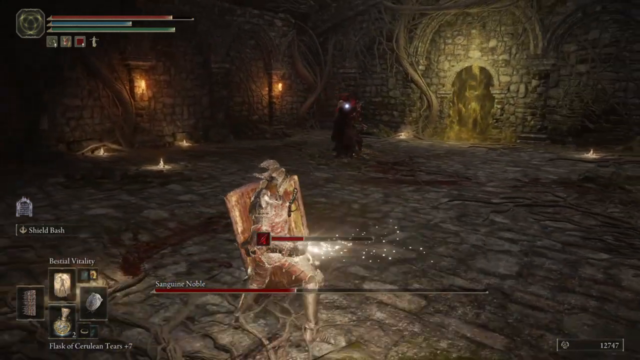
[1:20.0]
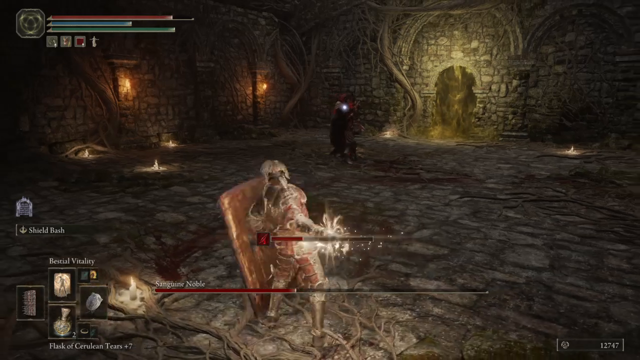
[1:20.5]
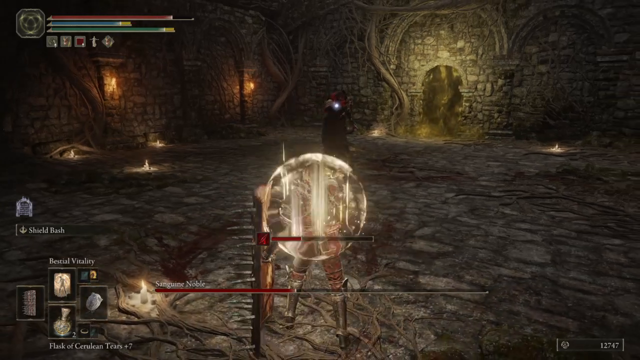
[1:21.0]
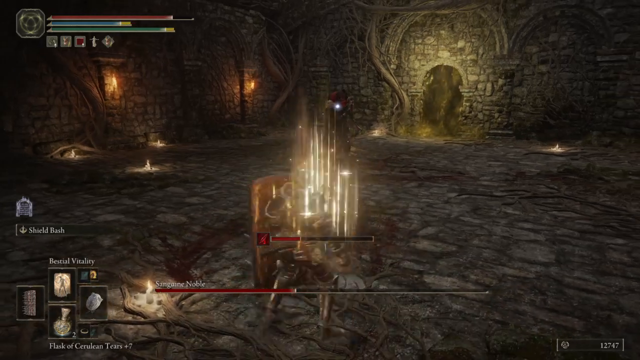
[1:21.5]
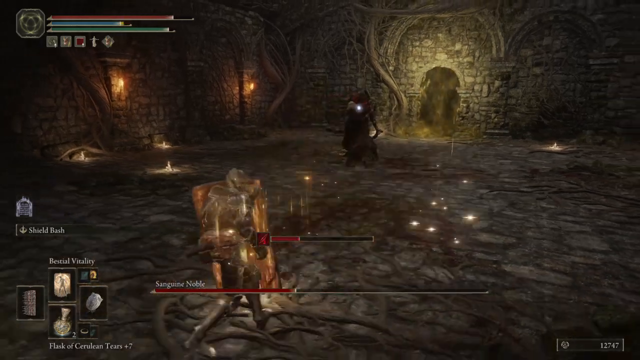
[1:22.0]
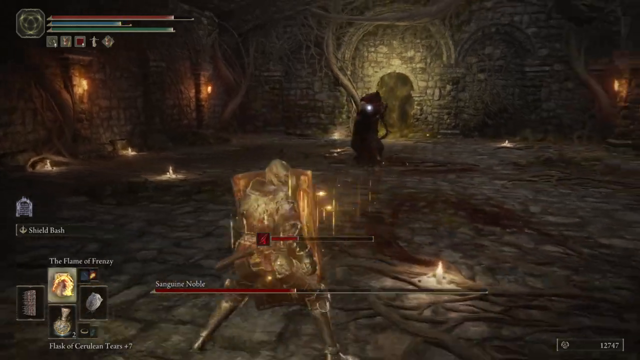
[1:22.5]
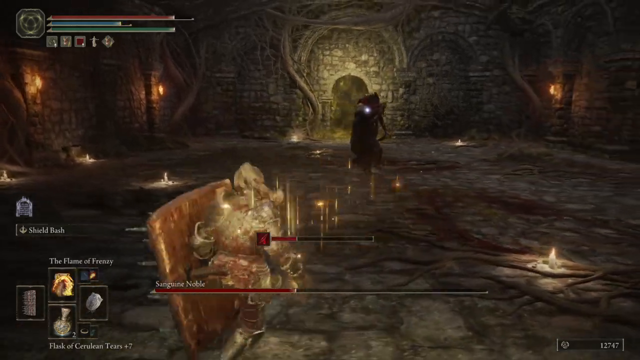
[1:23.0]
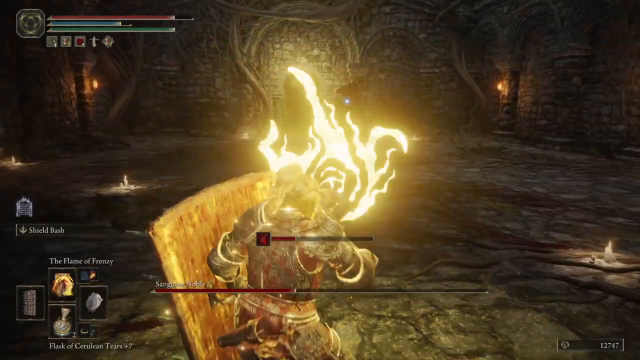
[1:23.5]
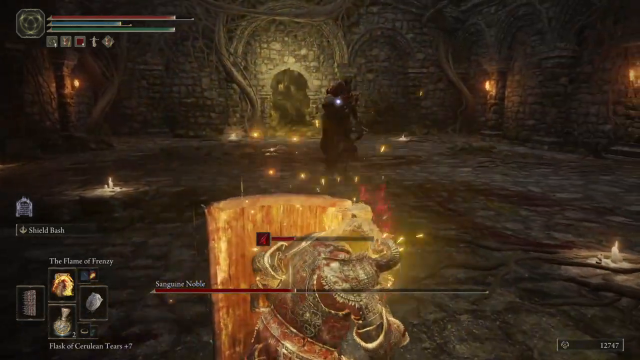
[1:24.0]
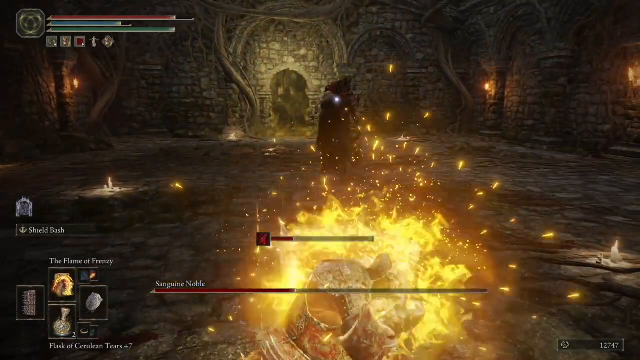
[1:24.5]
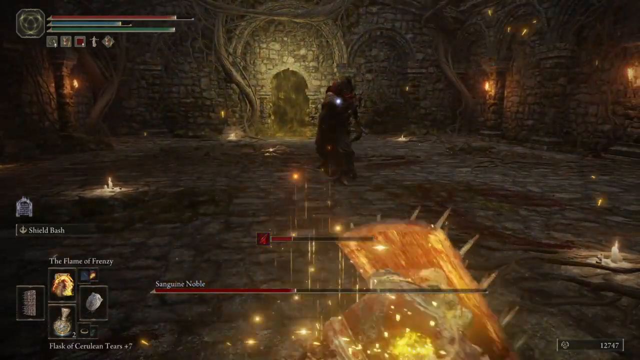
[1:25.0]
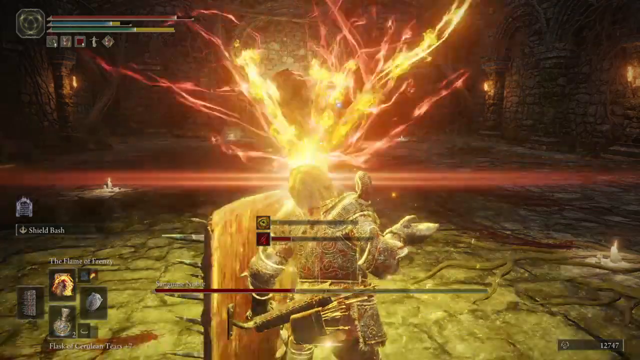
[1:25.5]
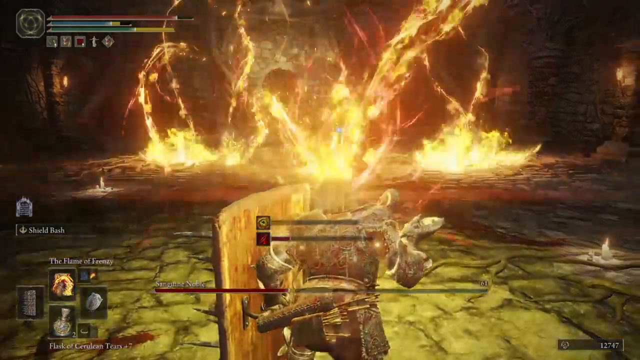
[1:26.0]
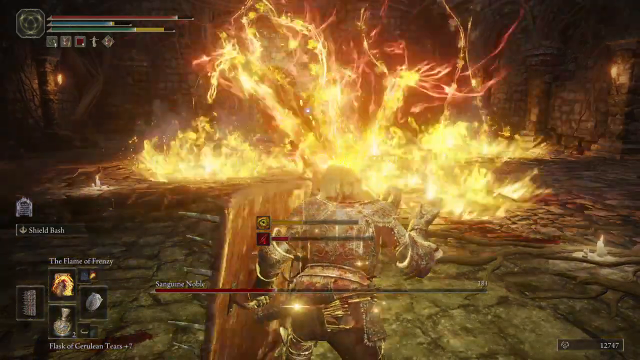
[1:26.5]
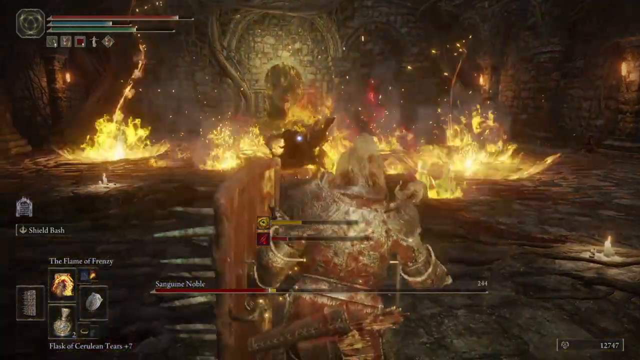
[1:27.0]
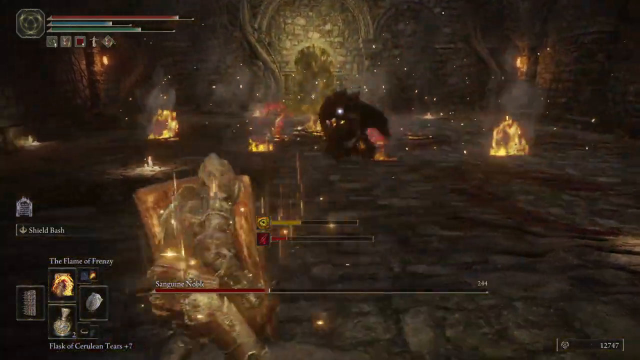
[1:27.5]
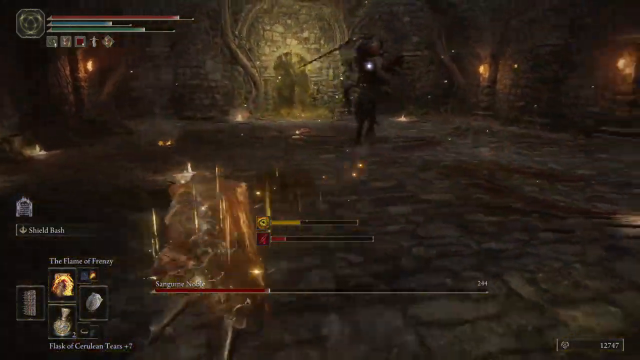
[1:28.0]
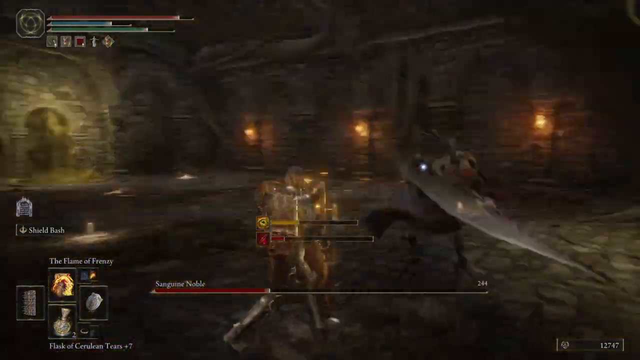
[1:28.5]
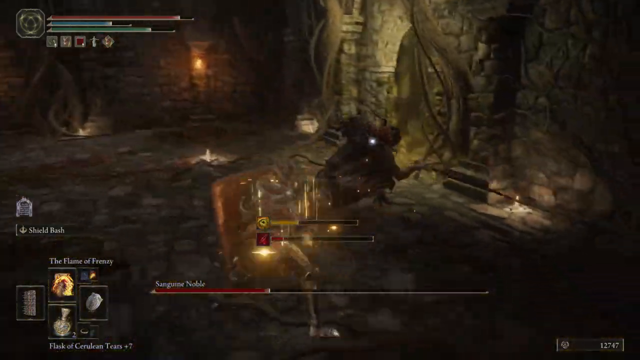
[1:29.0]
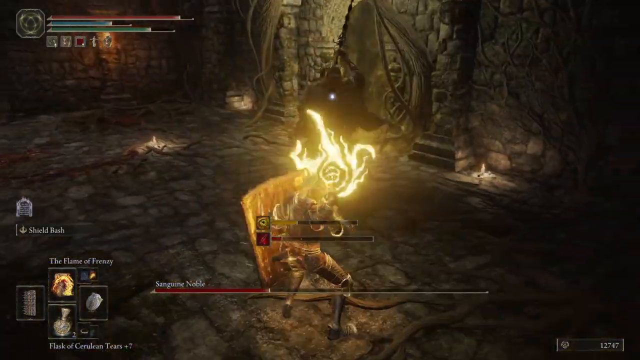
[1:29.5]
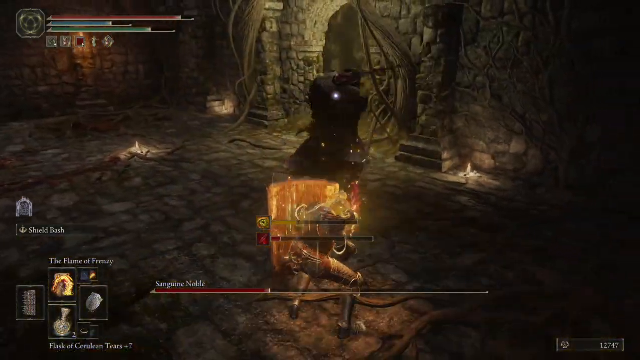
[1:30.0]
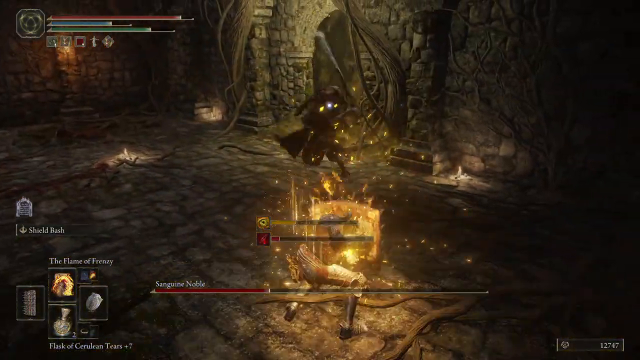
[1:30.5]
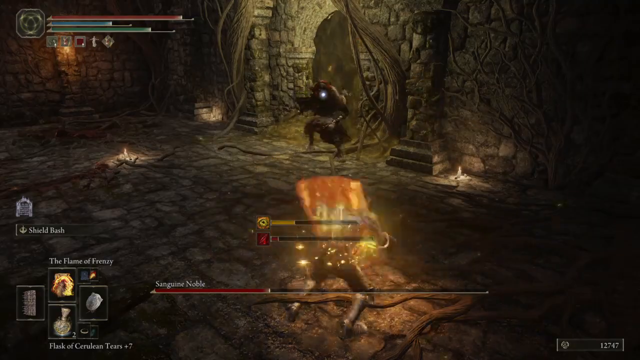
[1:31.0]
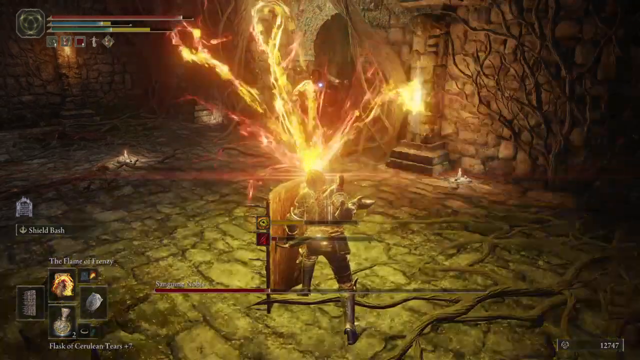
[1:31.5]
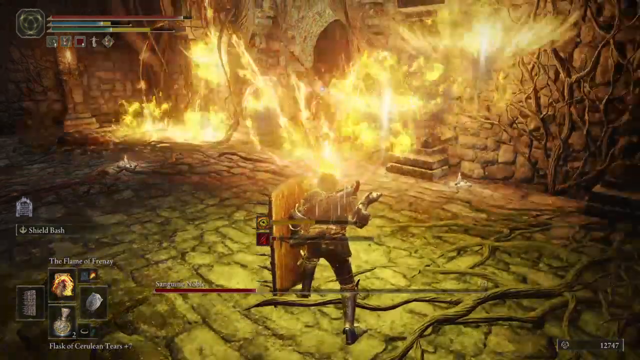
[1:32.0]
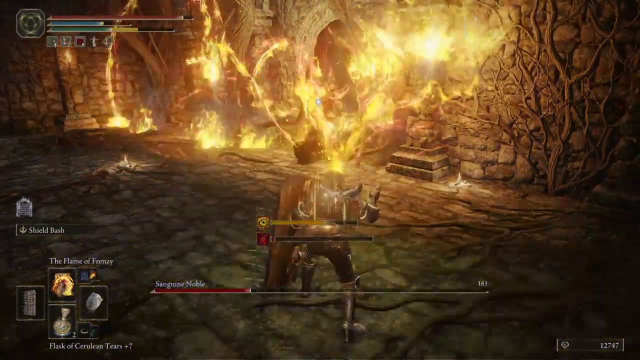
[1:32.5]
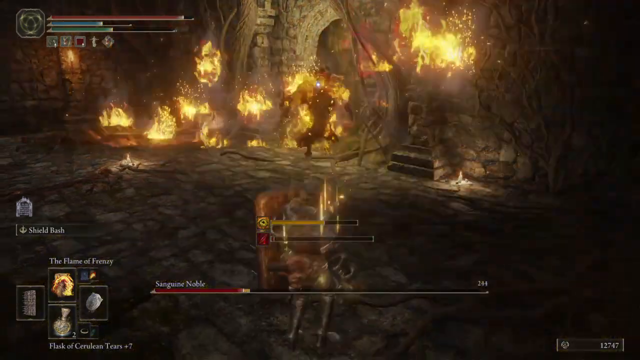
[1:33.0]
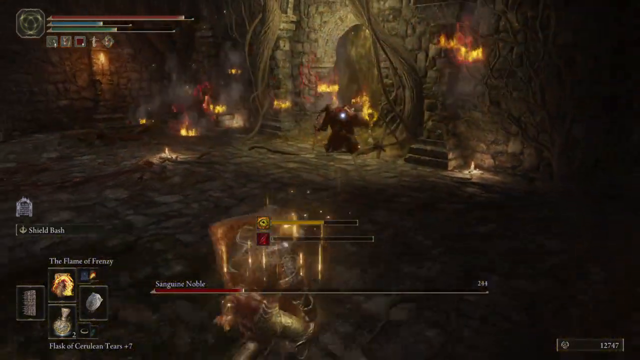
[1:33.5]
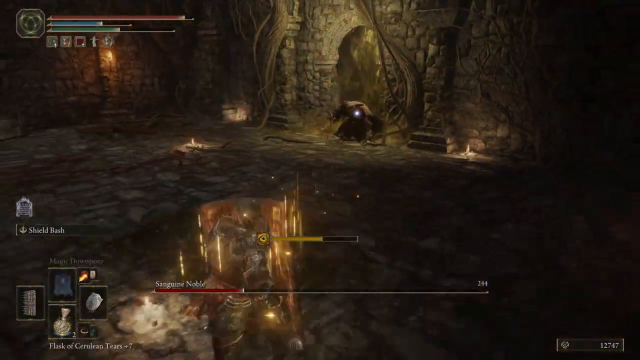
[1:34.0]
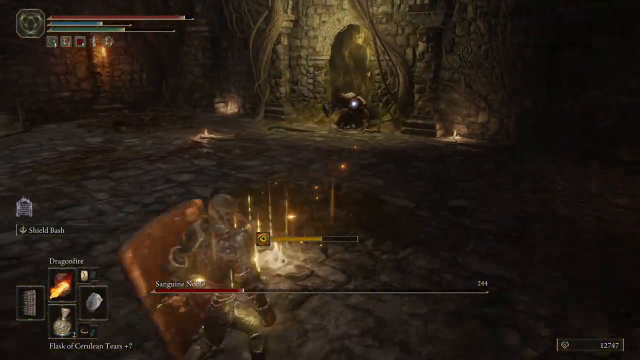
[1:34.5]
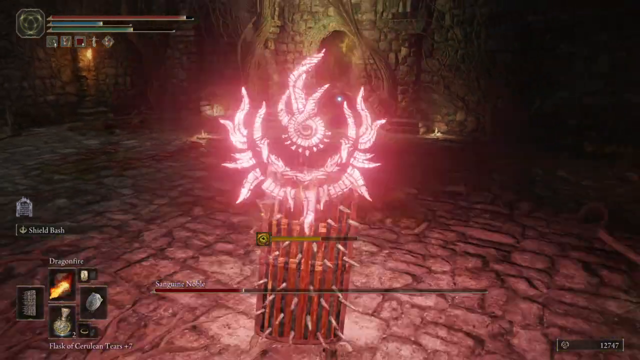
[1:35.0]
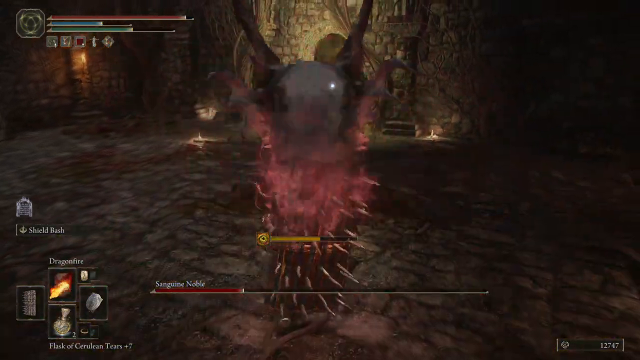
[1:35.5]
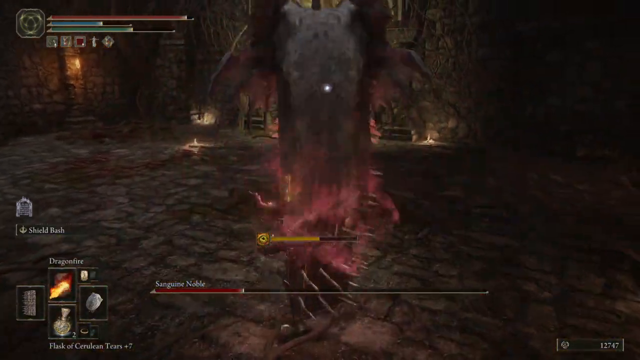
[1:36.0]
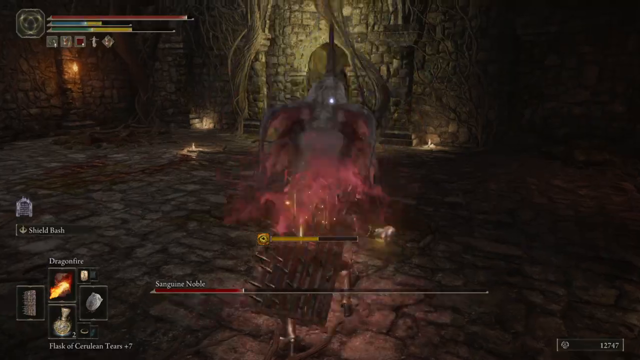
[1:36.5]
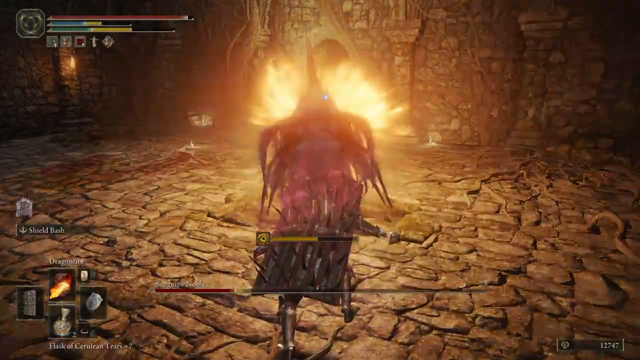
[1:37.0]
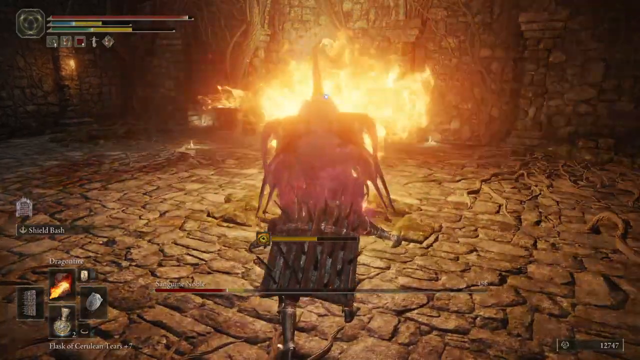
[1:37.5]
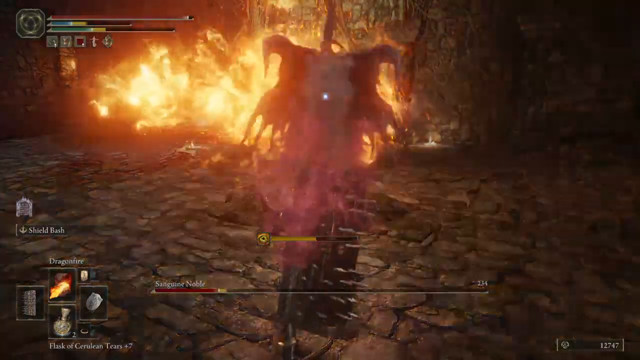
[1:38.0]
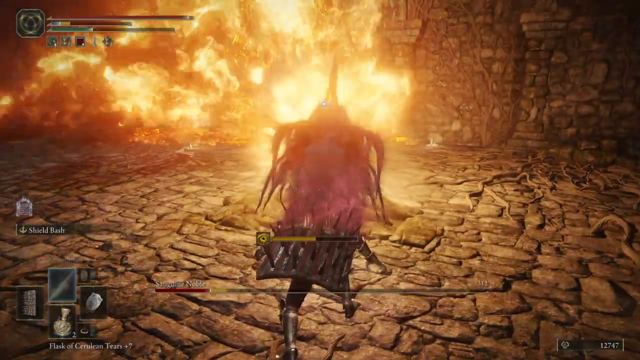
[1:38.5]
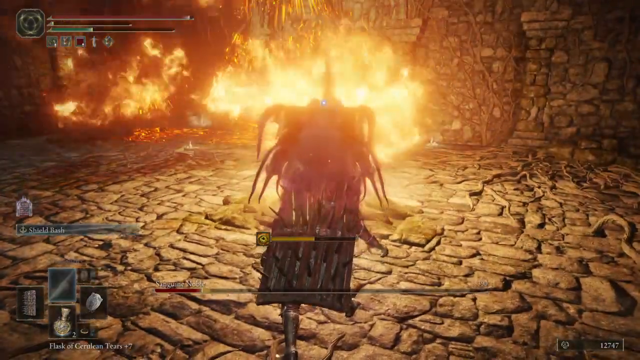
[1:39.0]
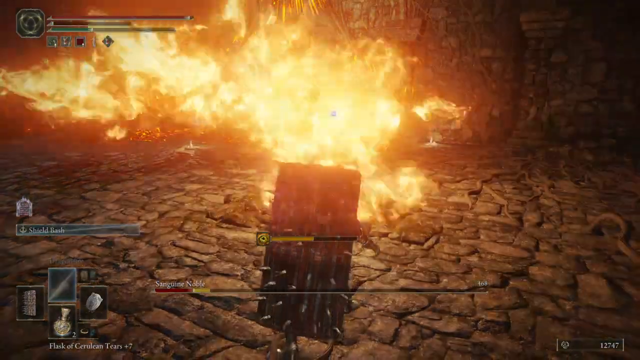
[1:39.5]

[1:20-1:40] The character has a glowing aura around him that is not from sipping a potion. He uses magic rather than bladed attacks: he shoots out what is pretty much a storm of fire that hits the other character, doing this twice, and then turns his head into what looks like a dragon head and spews fire at the other character.